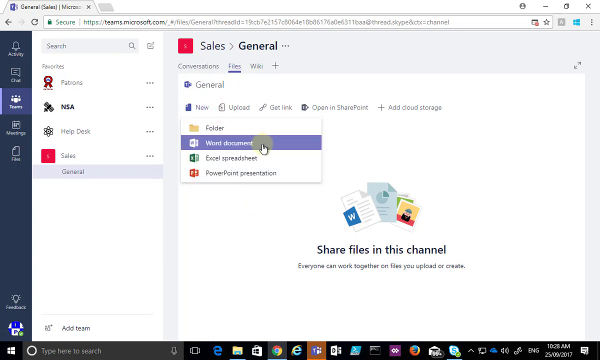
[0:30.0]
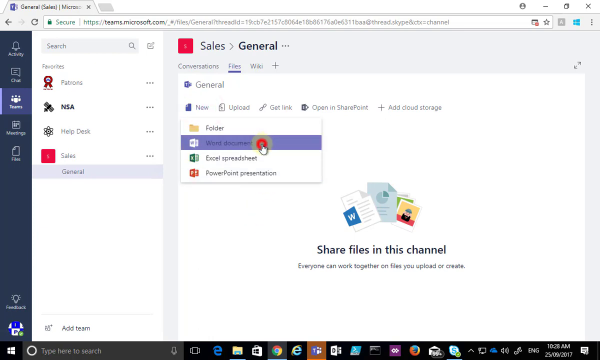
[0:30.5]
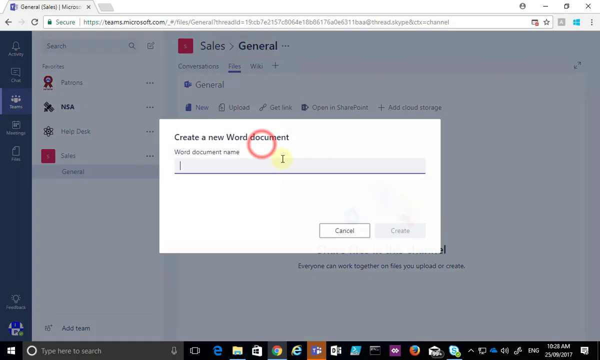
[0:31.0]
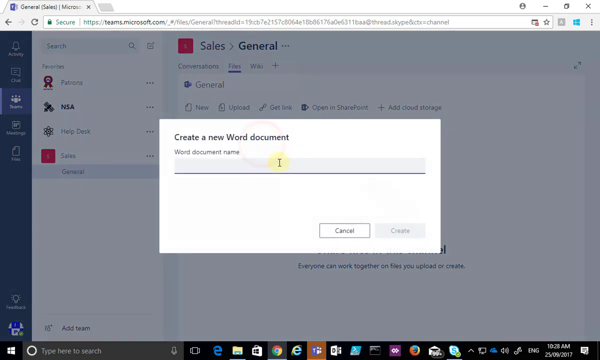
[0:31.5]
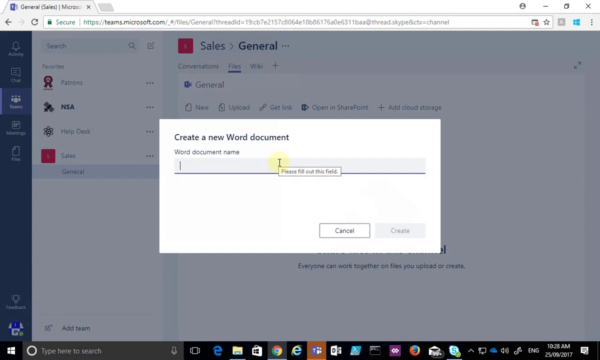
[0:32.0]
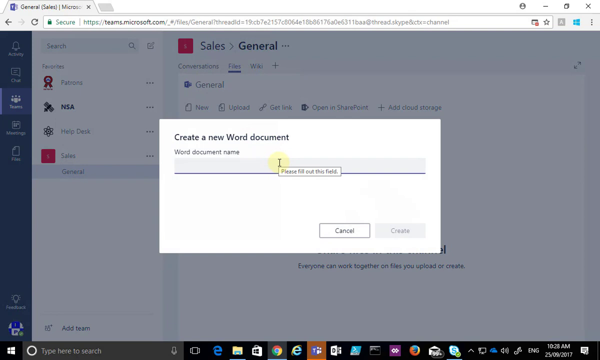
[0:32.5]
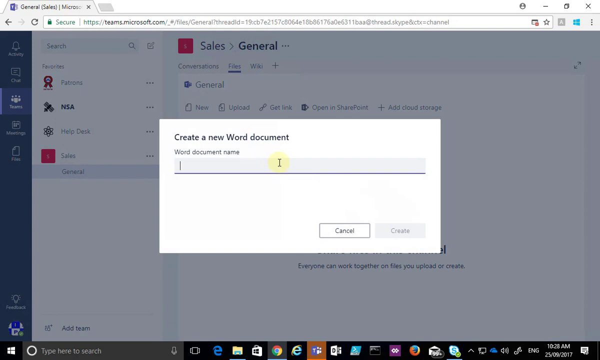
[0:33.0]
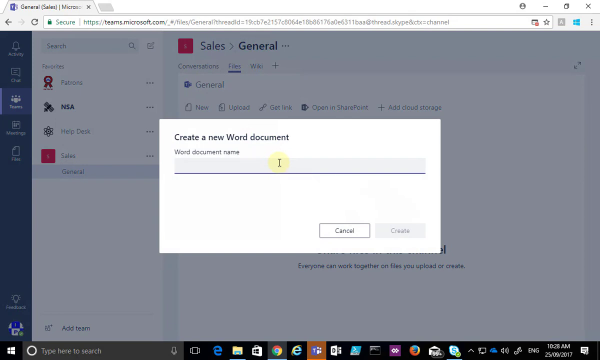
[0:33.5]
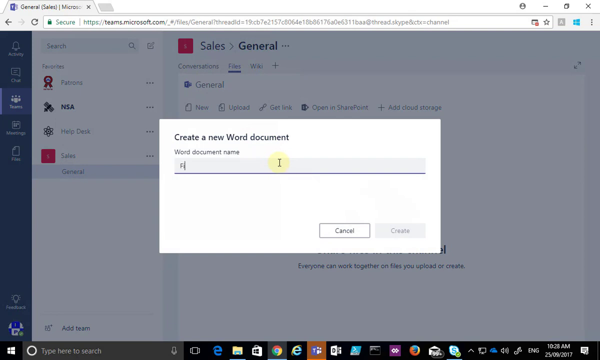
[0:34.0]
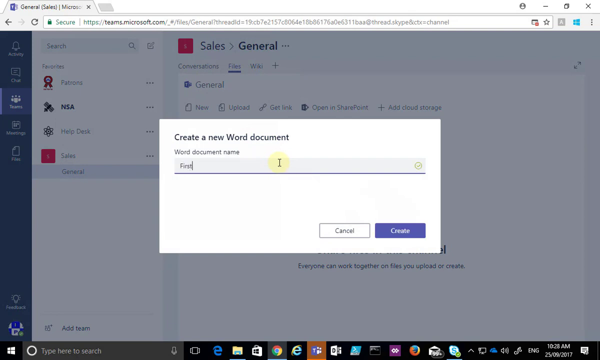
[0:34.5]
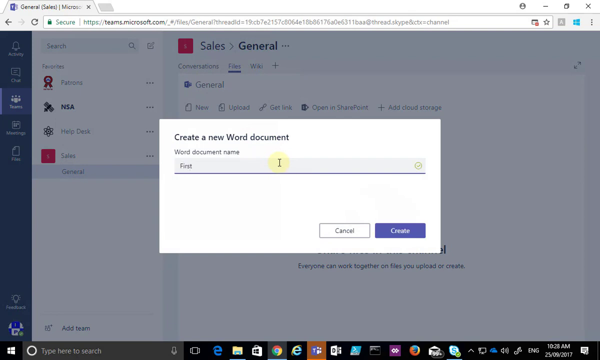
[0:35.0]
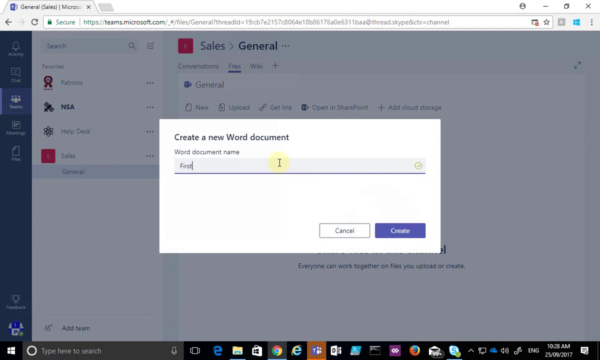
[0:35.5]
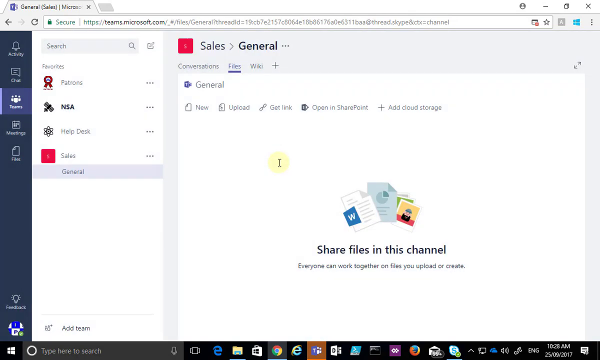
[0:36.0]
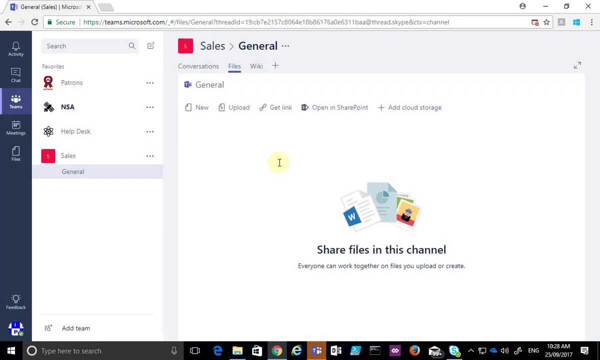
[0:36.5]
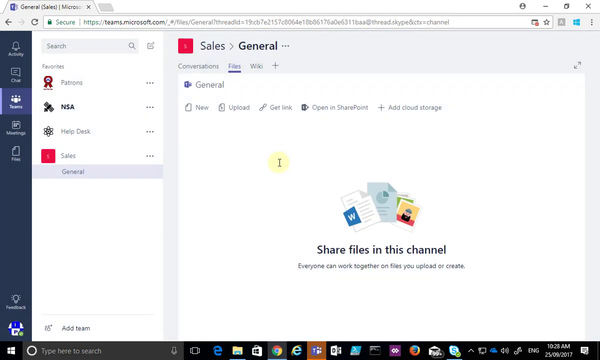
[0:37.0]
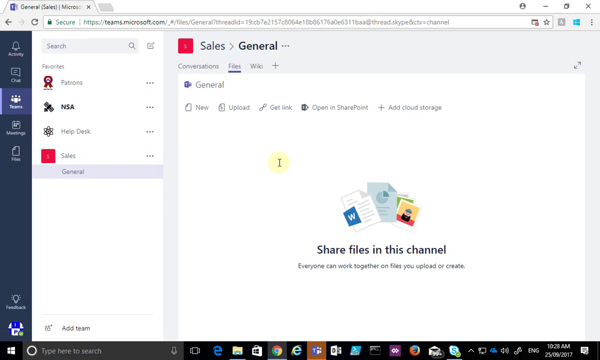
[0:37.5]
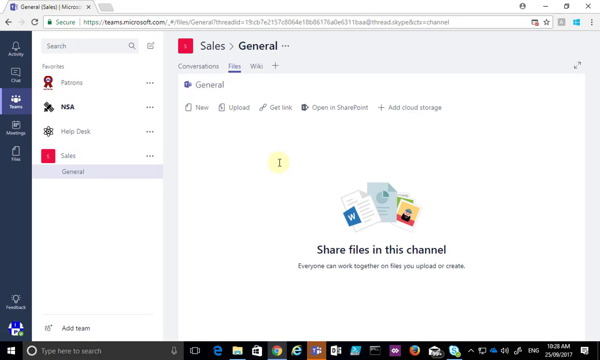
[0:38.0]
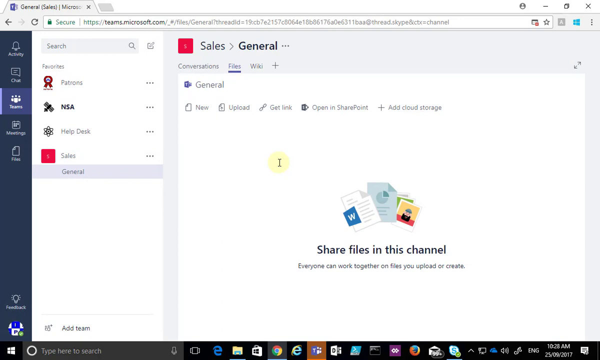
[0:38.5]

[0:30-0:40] With Word document selected on the General Sales screen, a pop-up appears that says "Create a new Word document," with "Word document name" and a field for typing the document's name. The name of the document is typed in first, and then Create is selected.